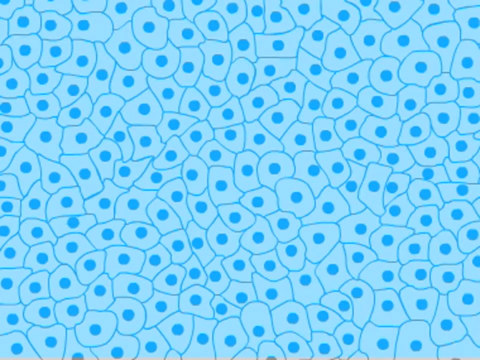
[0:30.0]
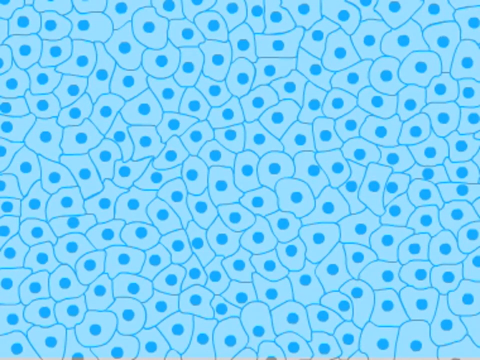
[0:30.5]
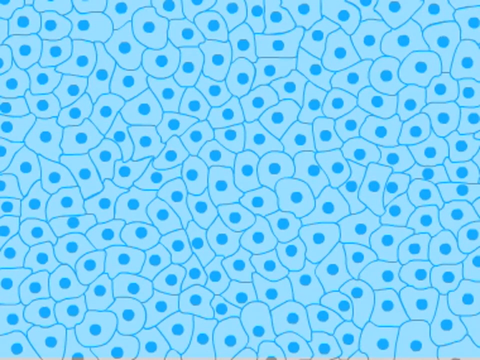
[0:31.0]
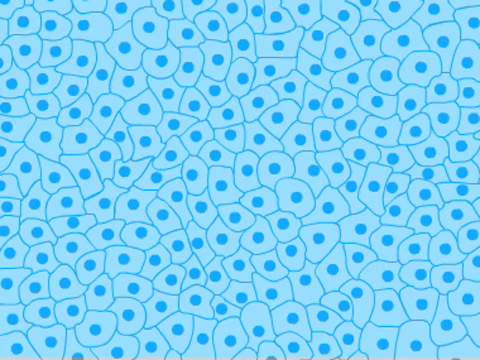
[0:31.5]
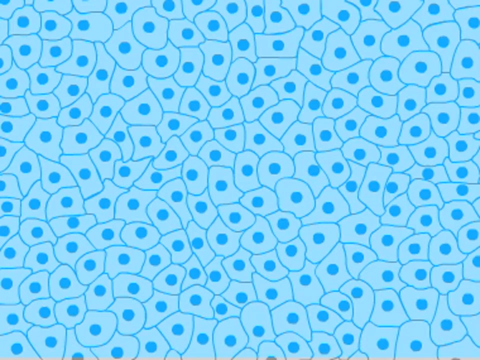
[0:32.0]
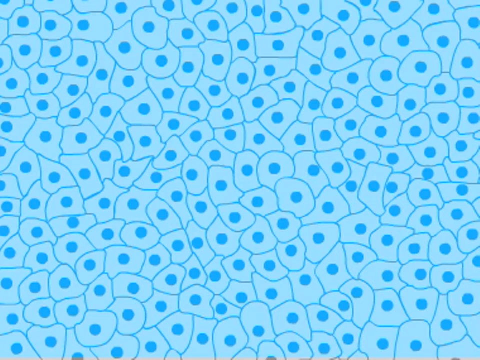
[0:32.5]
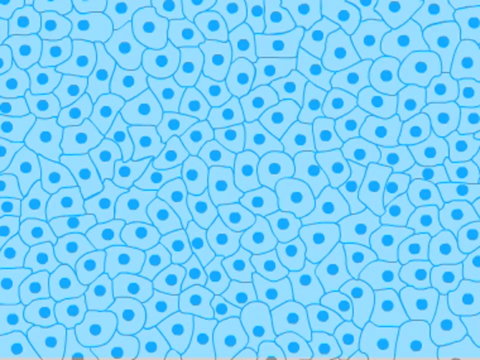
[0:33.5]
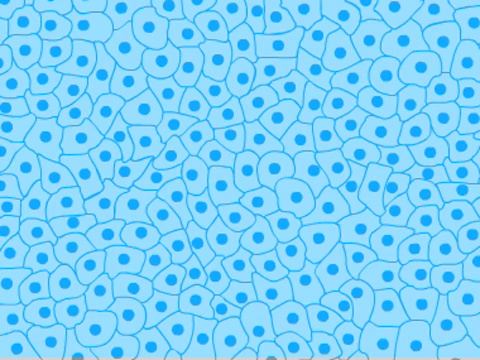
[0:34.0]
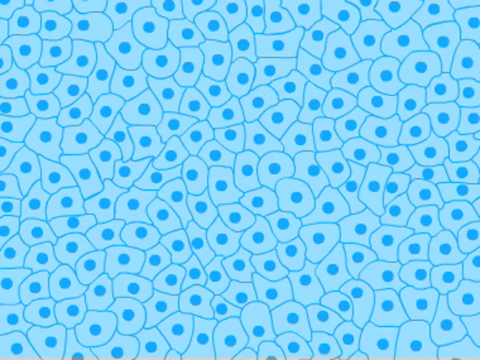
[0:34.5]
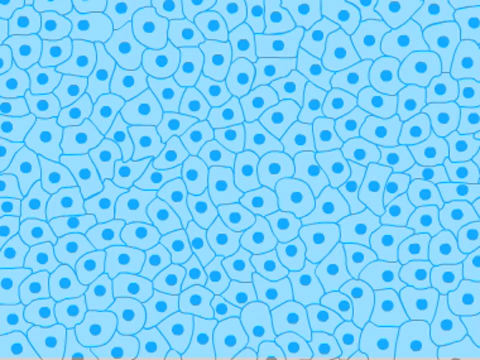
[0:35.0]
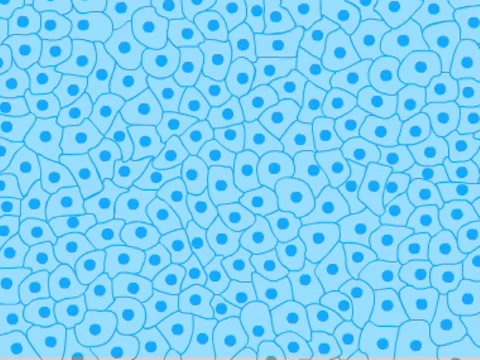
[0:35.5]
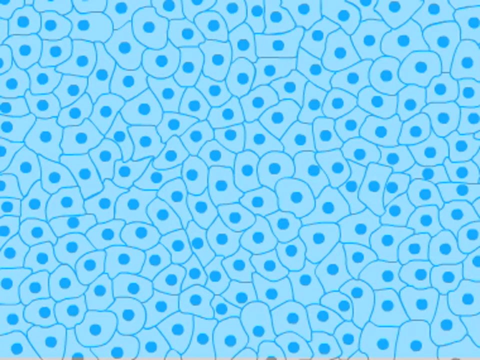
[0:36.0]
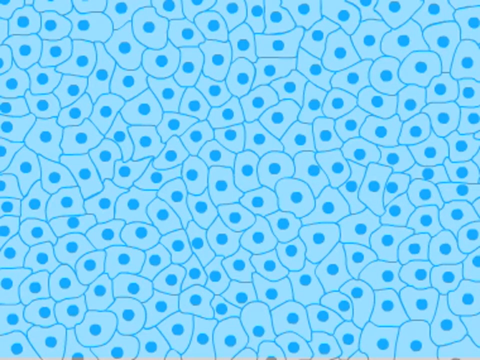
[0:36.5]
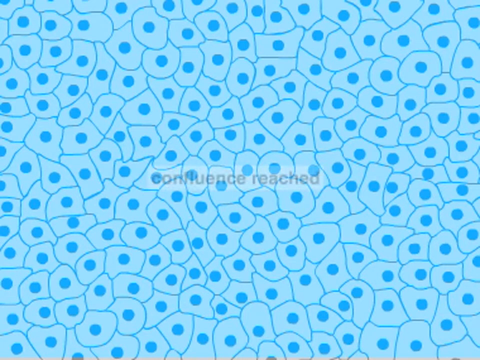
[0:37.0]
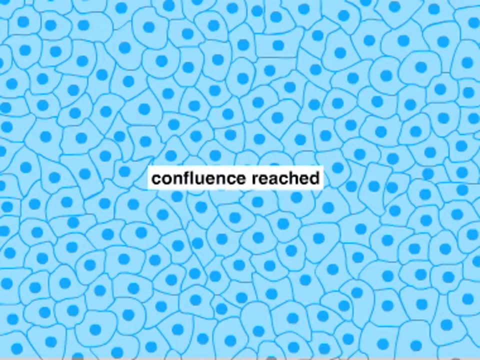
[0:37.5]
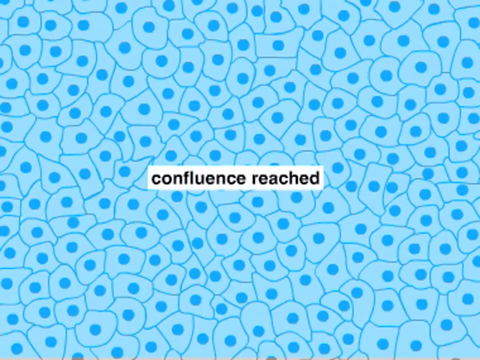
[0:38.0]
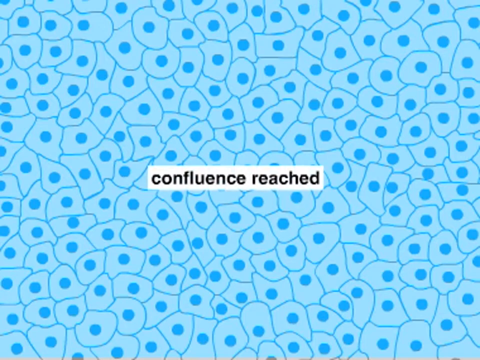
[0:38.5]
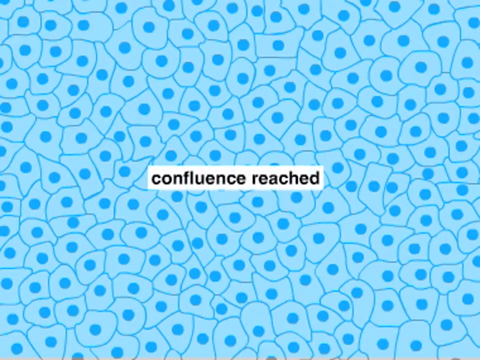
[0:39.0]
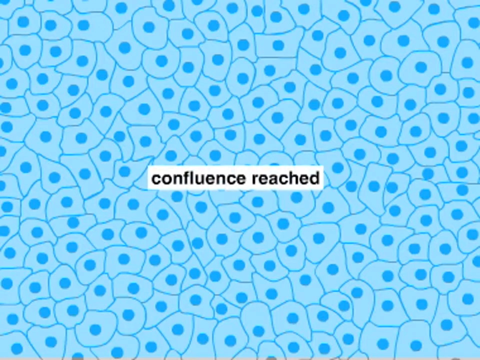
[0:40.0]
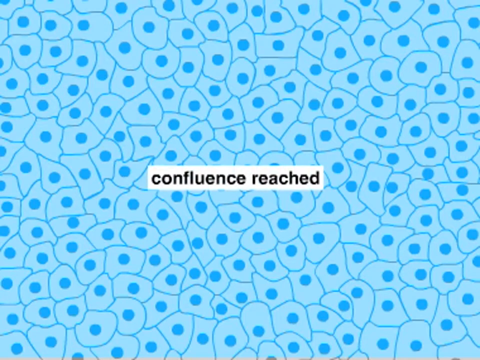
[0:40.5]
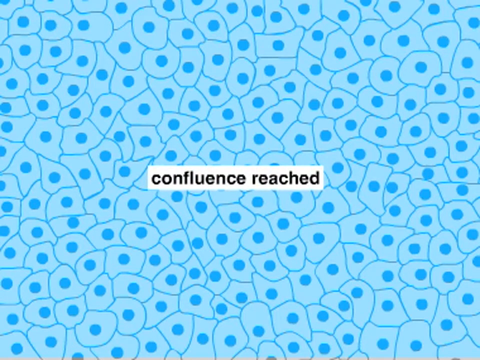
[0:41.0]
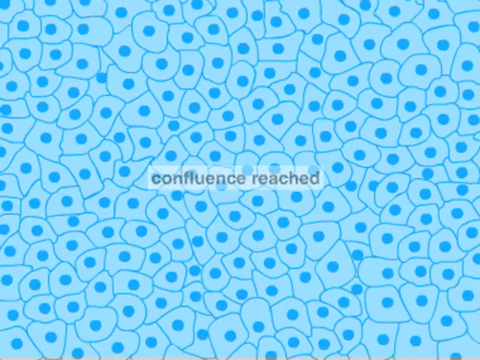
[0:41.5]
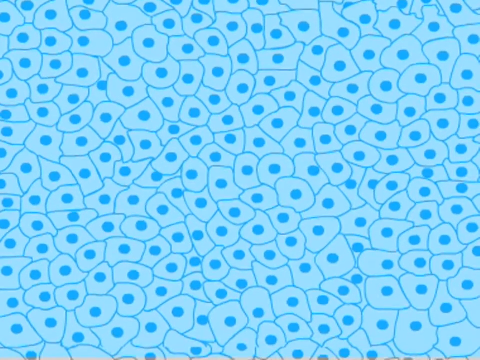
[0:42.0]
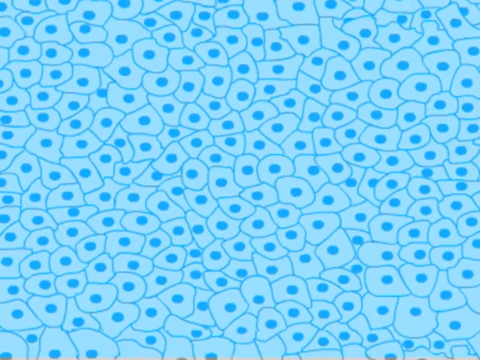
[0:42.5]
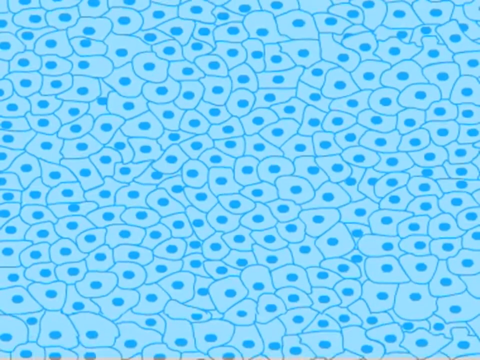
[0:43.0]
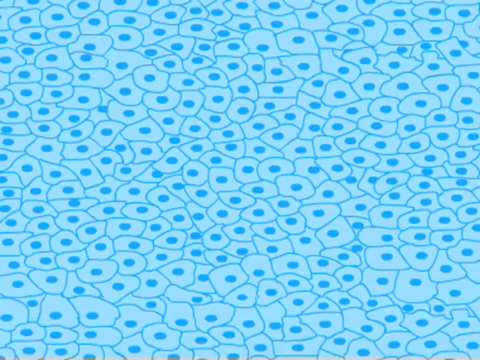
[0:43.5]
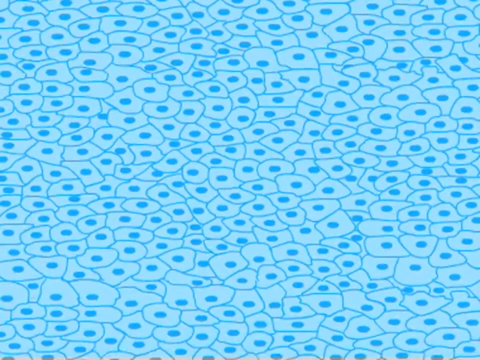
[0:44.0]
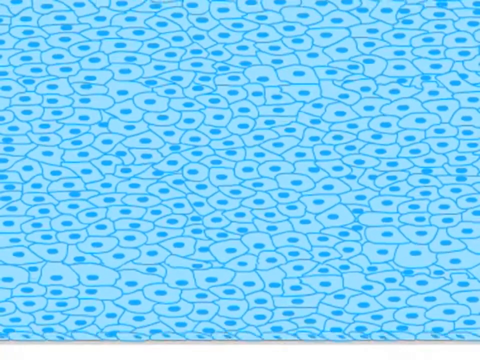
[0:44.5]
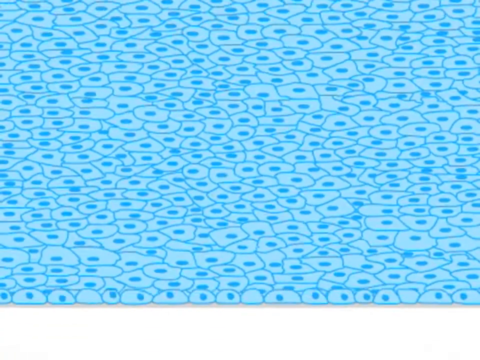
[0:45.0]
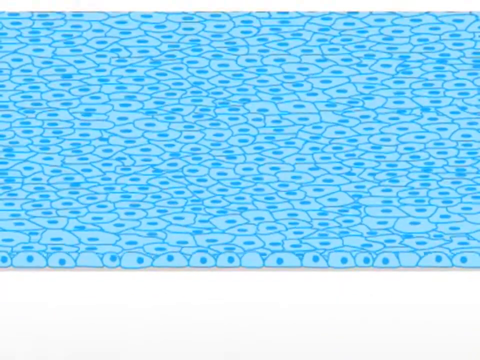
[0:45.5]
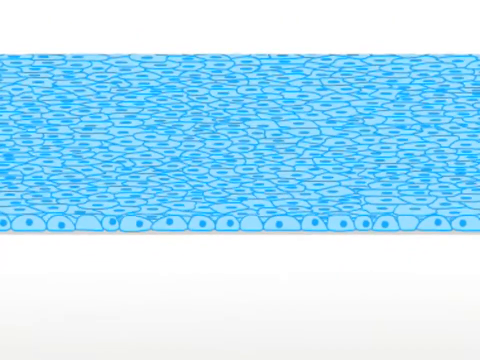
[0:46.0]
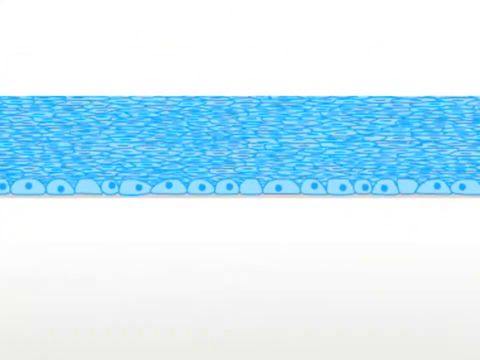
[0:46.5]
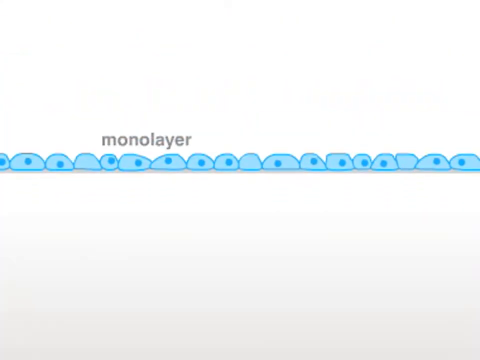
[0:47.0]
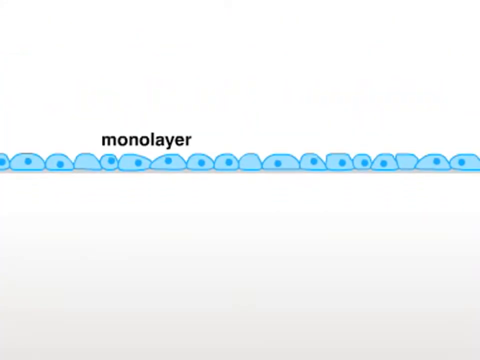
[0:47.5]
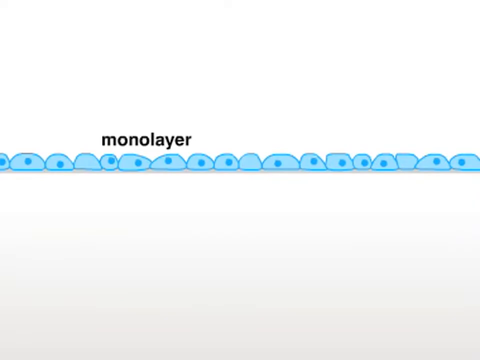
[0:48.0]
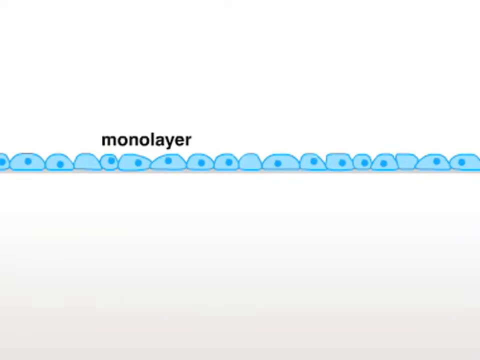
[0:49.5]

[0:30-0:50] A mass of blue circles is smashed together, each with a little round, darker blue dot at its center. Text appears on the screen reading "confluence reached." The cells are so smashed and merged together that they take on different shapes, like little blue blobs with a dark blue circle in the center. The screen rotates on its horizontal plane until it is flat, showing the side layer, and the text "monolayer" appears. From this side view, the lumpy tops of the shapes are visible going up and down, and the little centers can be seen through some of the side layers. The irregular, smushed shapes are visible both from the top and in the monolayer side view.